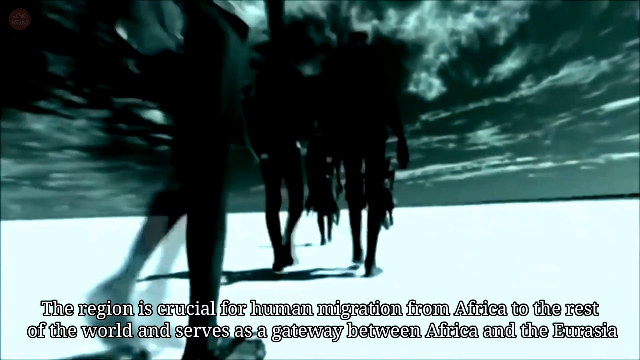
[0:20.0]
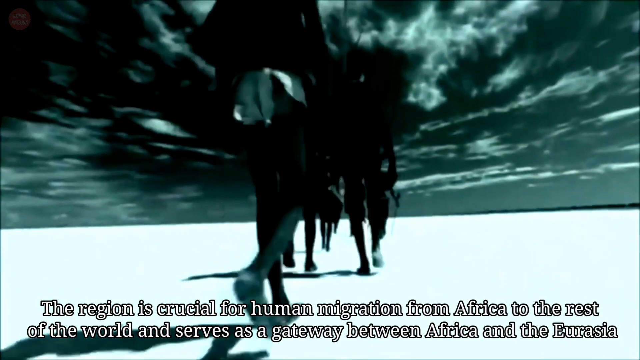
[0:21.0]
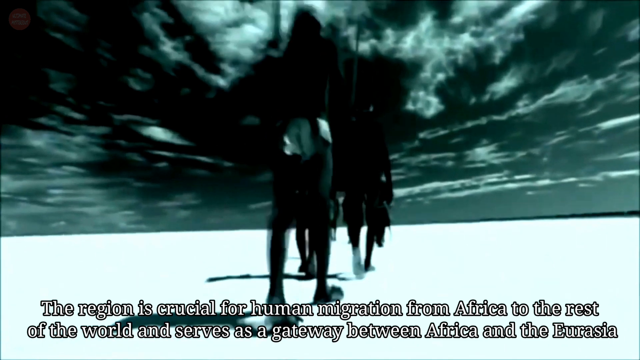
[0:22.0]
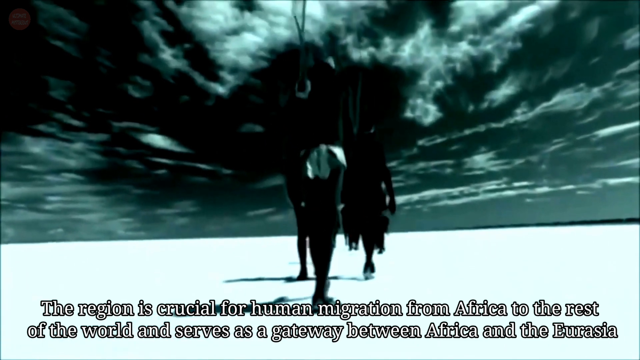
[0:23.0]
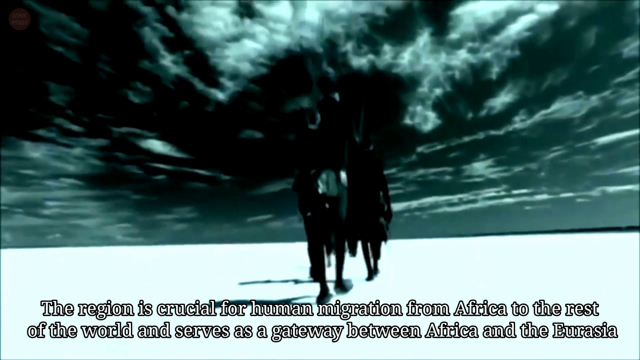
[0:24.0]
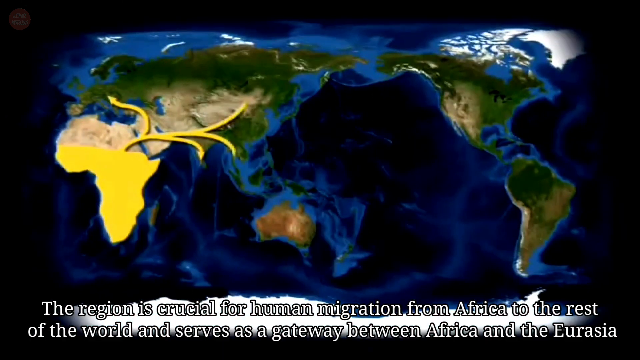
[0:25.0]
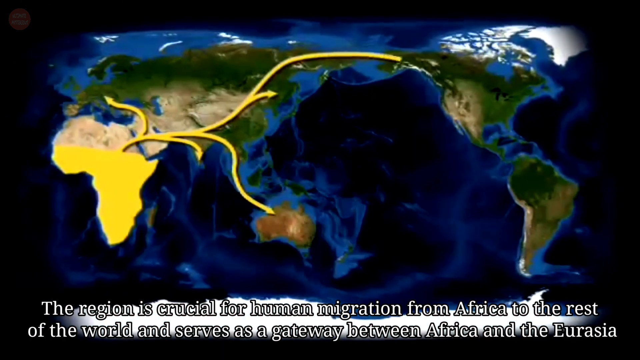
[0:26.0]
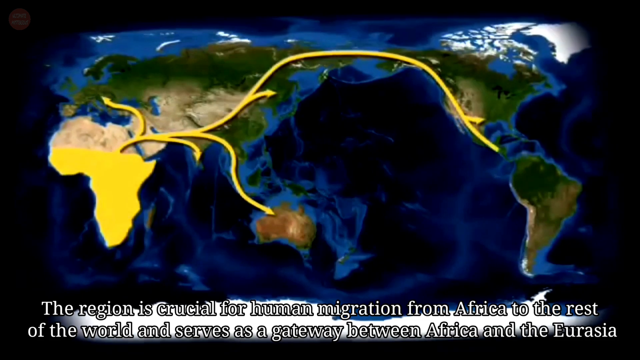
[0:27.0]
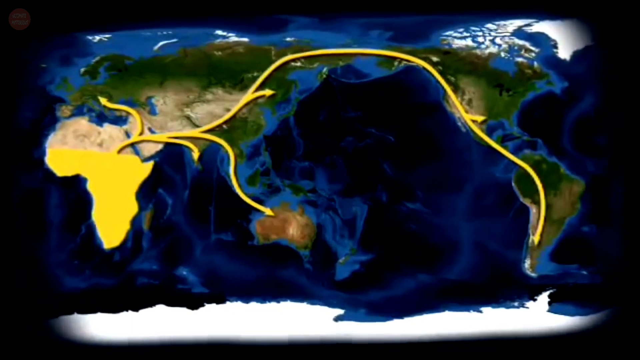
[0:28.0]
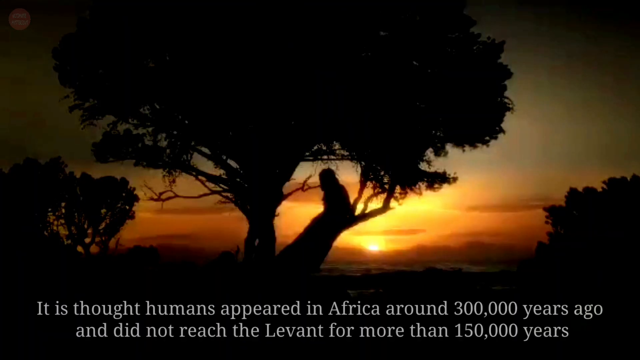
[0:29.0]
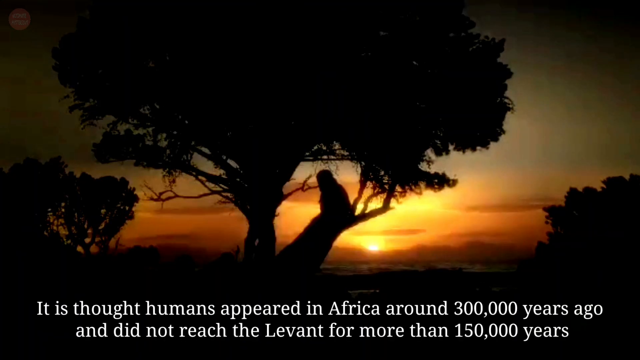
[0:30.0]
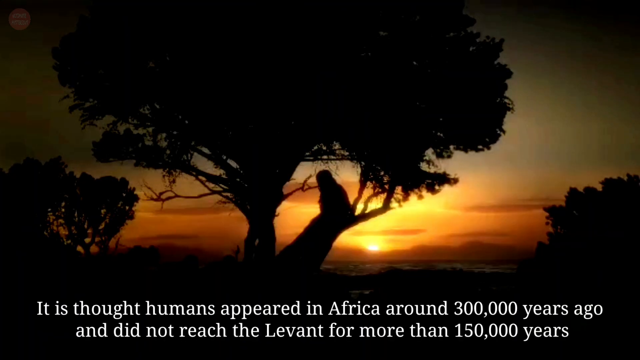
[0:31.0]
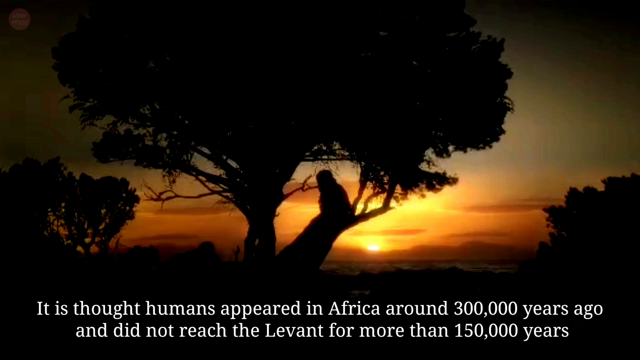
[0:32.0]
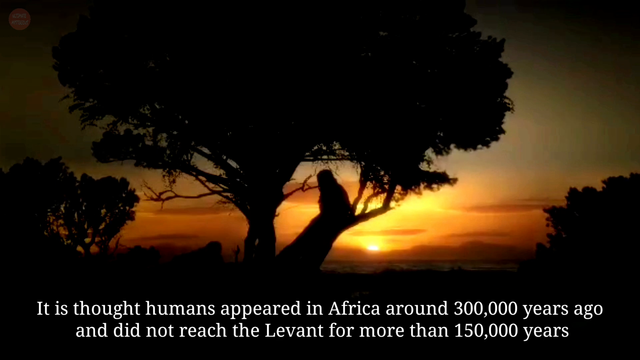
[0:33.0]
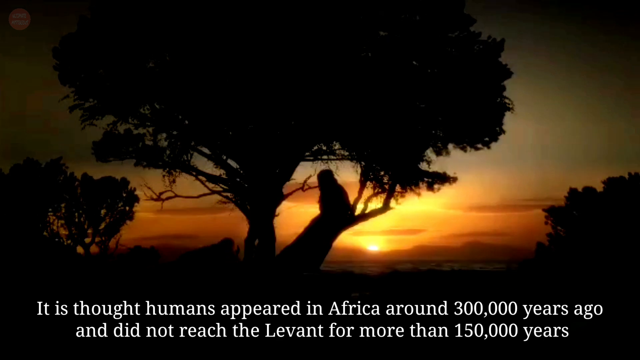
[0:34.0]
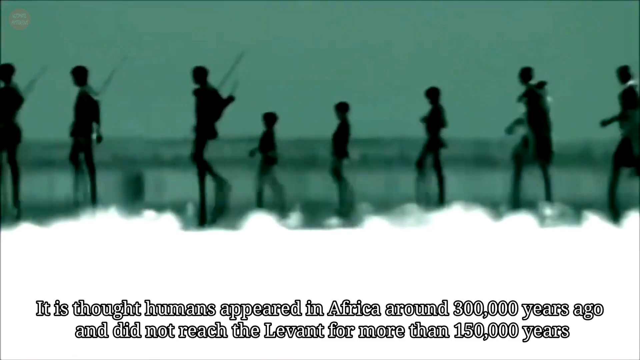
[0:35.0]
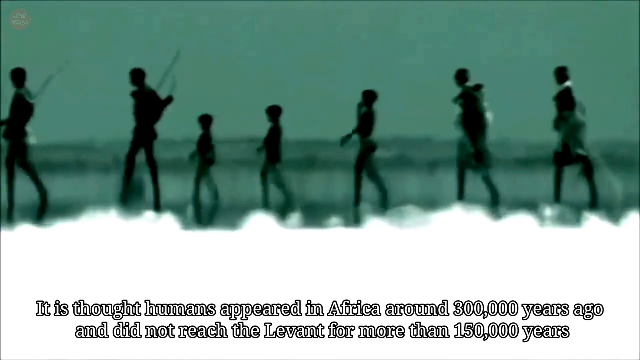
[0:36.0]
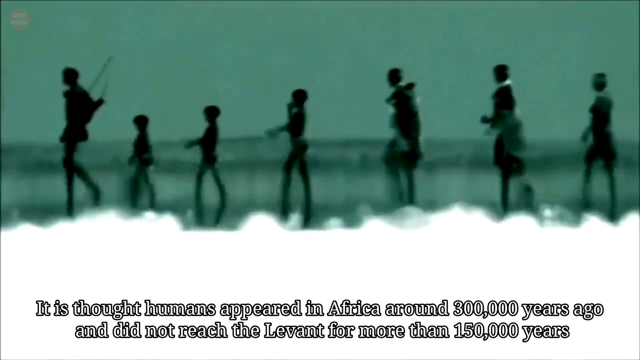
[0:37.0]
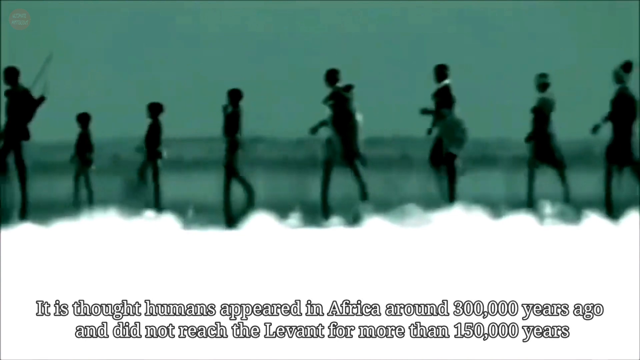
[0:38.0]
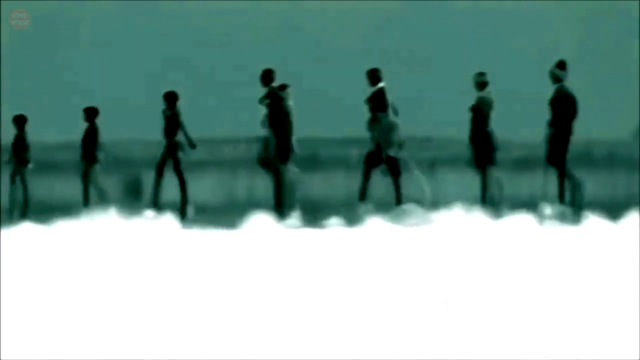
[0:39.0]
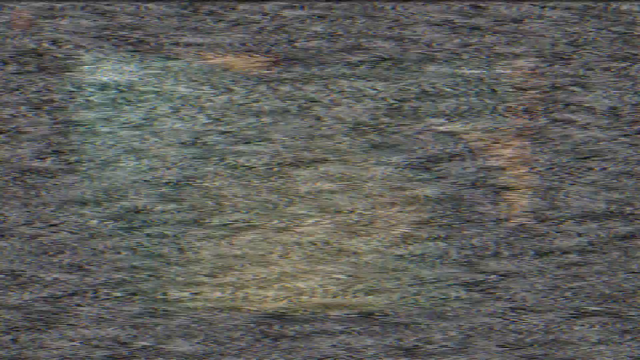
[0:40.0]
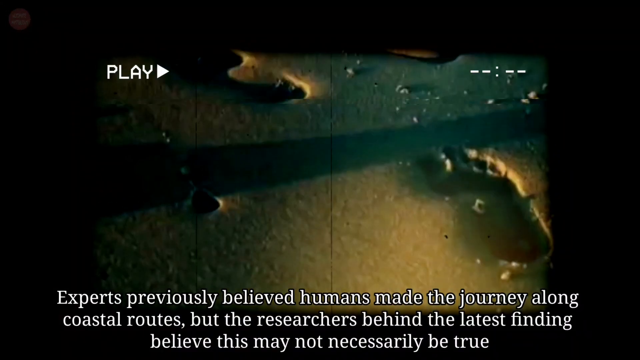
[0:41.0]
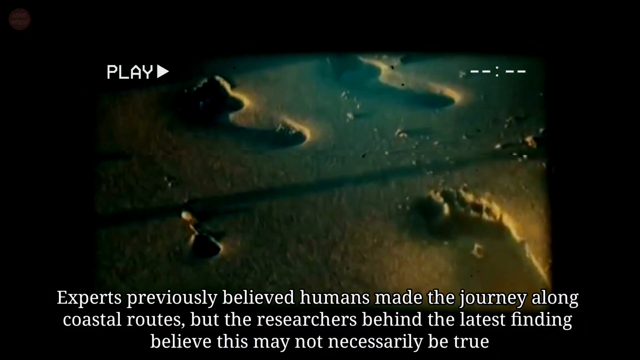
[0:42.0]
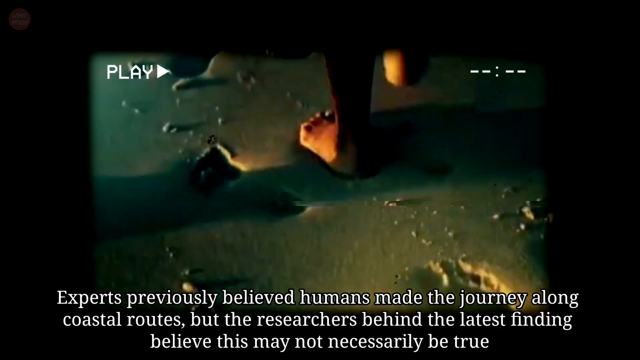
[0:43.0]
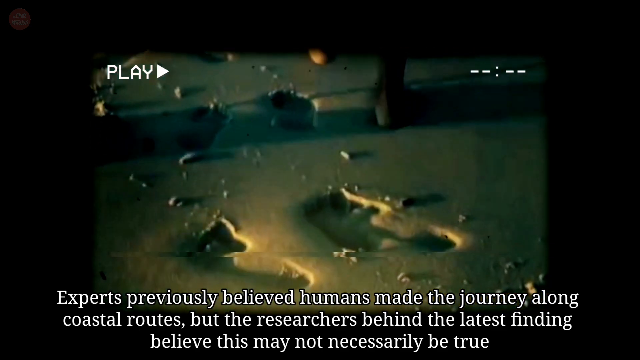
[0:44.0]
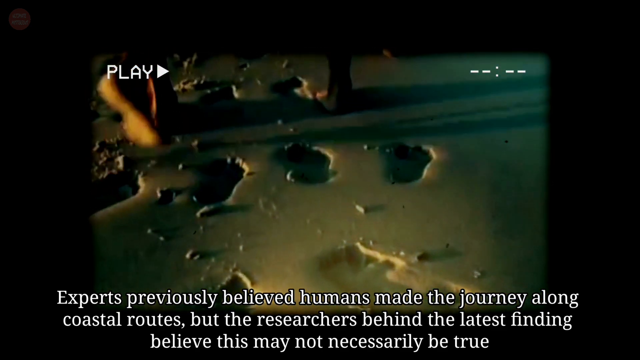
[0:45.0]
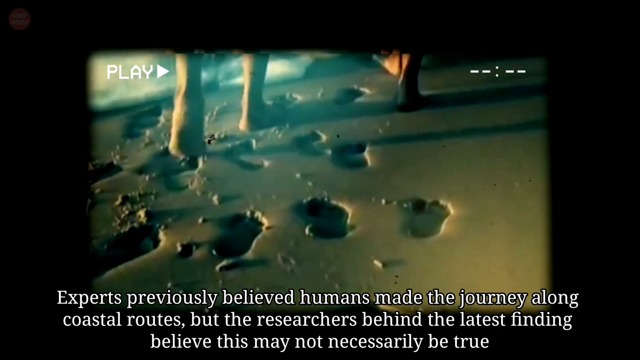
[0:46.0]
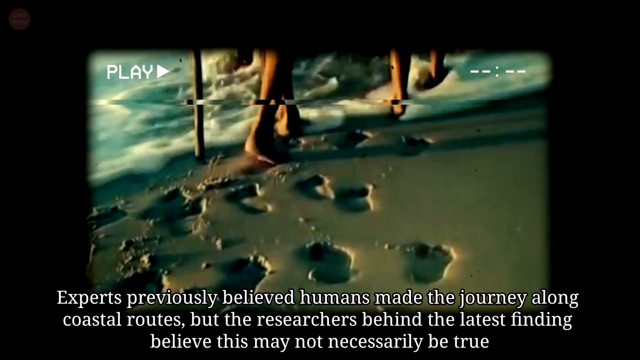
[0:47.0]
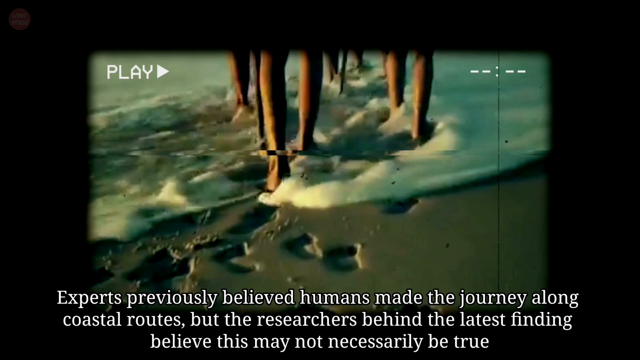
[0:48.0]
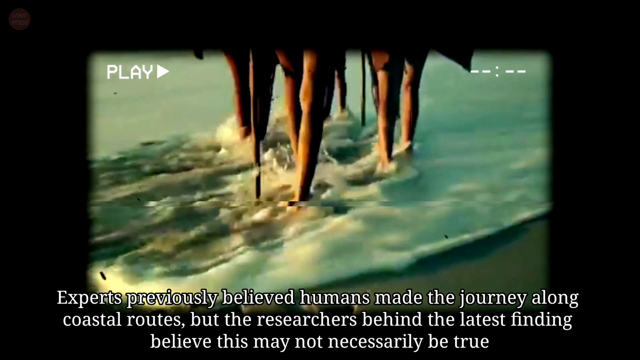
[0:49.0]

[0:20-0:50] A reenactment shows ancient humans walking through the area, coming from the bottom of the frame up to the top. Captions at the bottom state that the area was crucial for human migration from Africa to the rest of the world and was a gateway between Africa and Eurasia. The video cuts to a world map on which yellow lines show how humans would have traveled out of Africa to Eurasia, then Australia, then the Americas, starting with North America and running all the way down. The bottom captions read "it is thought humans appeared in Africa more than 300,000 years ago, and did not reach the Levant" for more than 150,000 years. Next there are apparently some creatures, possibly lions, up in trees, seemingly to represent Africa, followed by silhouettes of people walking across as part of the reenactment. The captions say experts previously believed humans made the journey along coastal routes, "but the researchers behind the latest finding," and then cut off. Footage that looks like home TV footage shows people walking along a beach in the water, apparently to illustrate the earlier assumption.